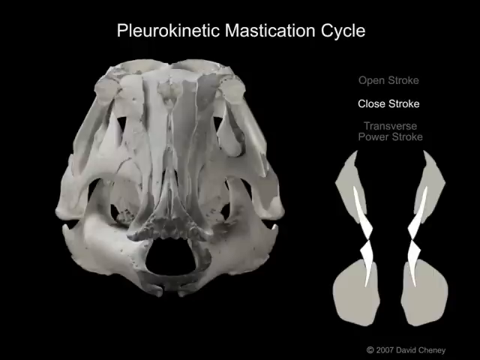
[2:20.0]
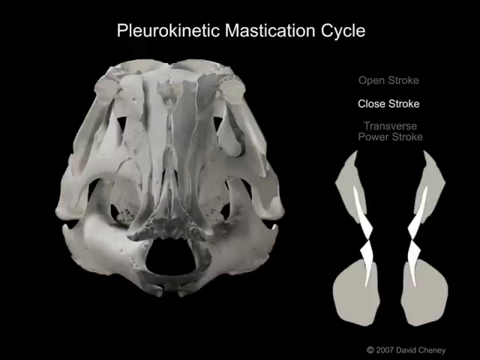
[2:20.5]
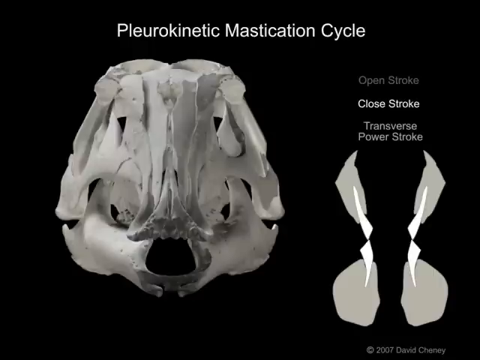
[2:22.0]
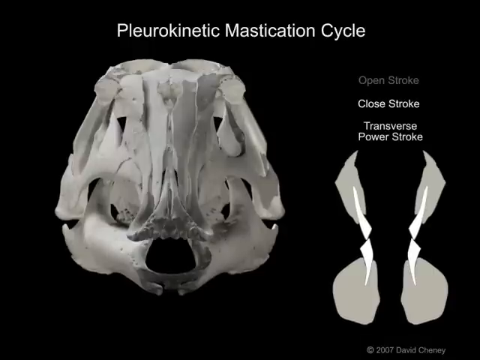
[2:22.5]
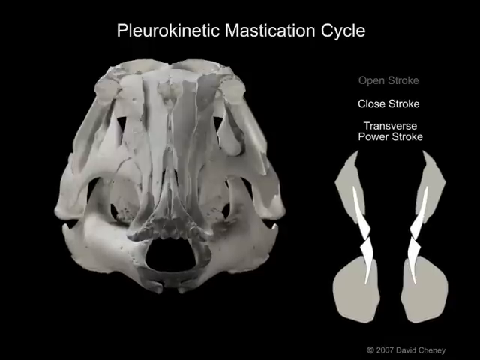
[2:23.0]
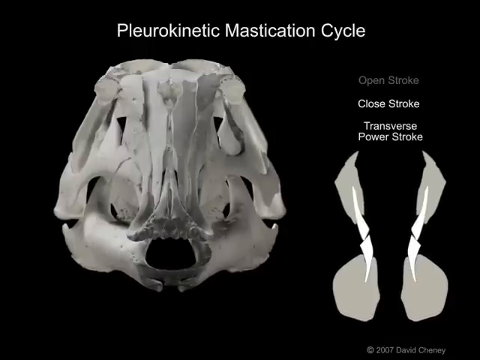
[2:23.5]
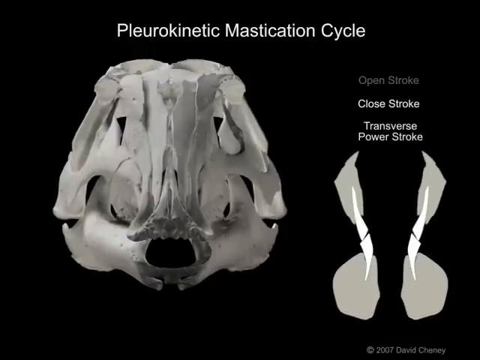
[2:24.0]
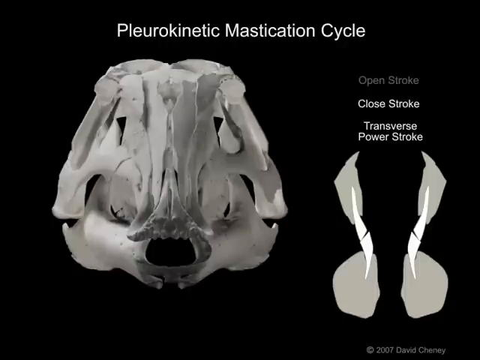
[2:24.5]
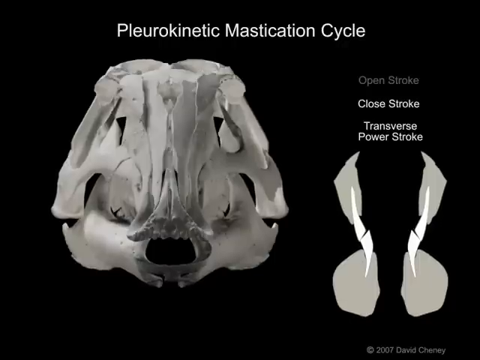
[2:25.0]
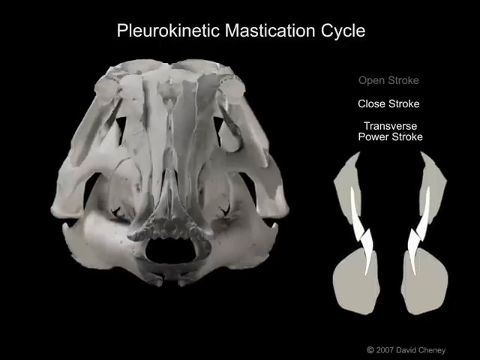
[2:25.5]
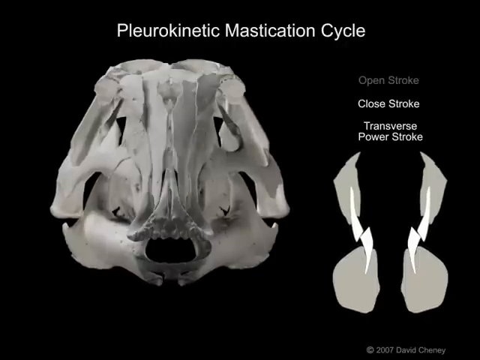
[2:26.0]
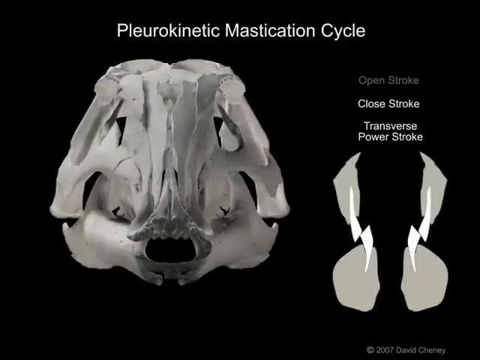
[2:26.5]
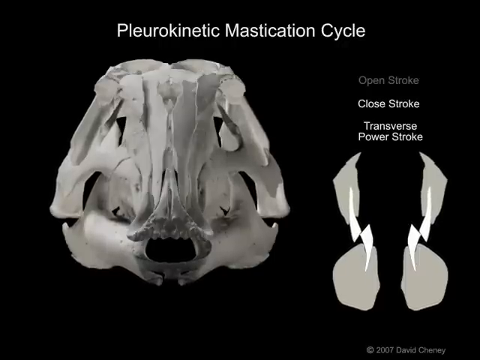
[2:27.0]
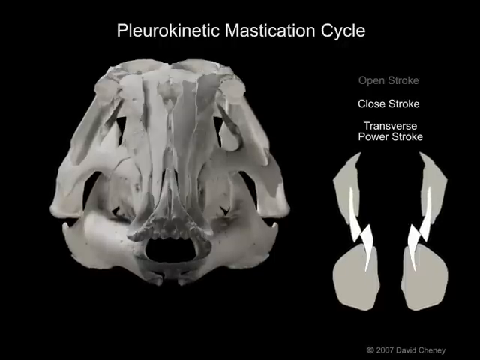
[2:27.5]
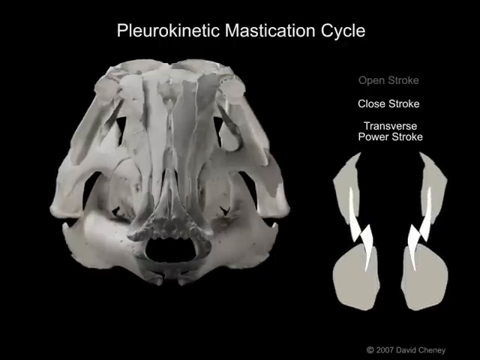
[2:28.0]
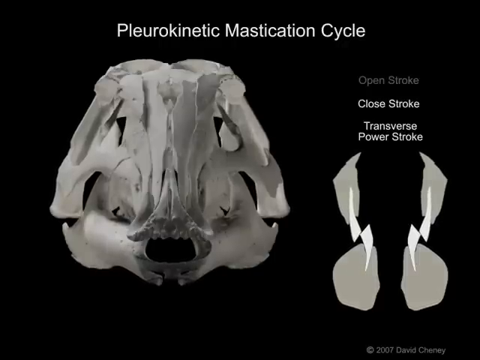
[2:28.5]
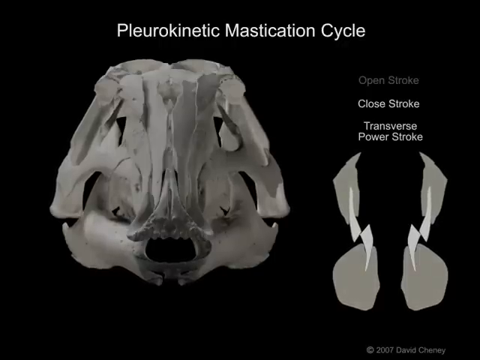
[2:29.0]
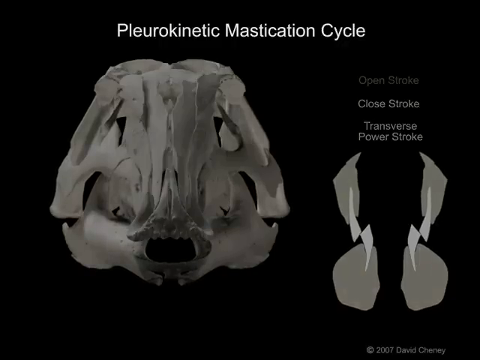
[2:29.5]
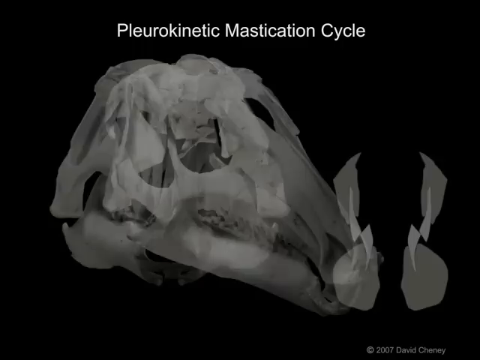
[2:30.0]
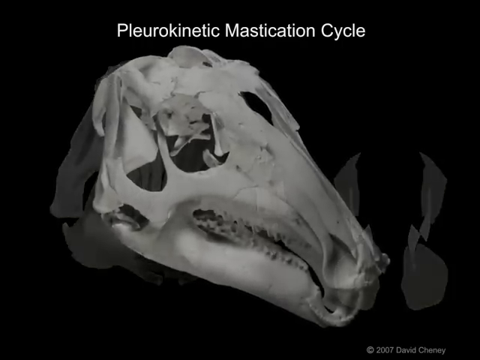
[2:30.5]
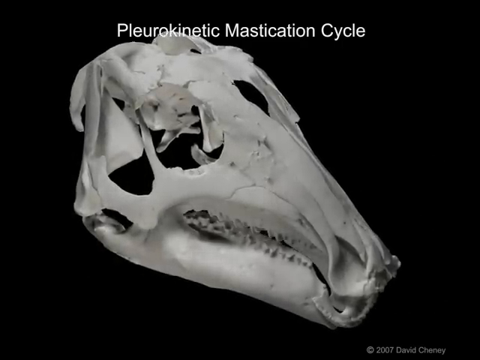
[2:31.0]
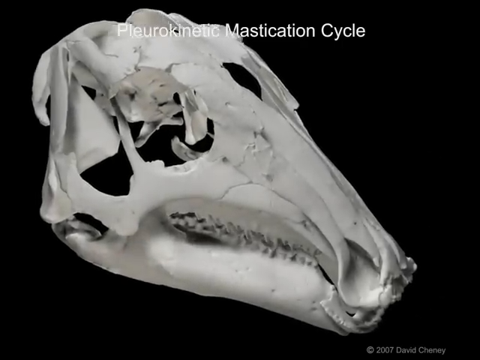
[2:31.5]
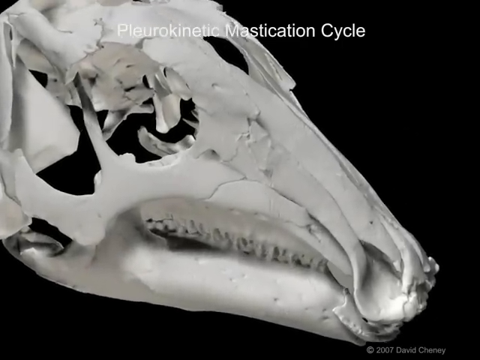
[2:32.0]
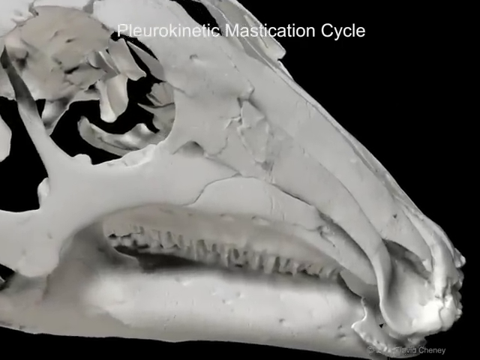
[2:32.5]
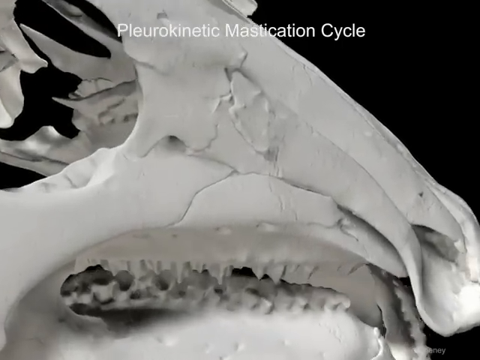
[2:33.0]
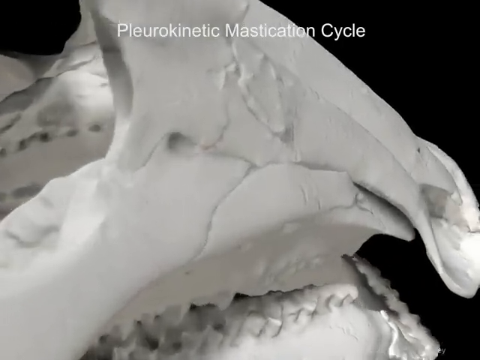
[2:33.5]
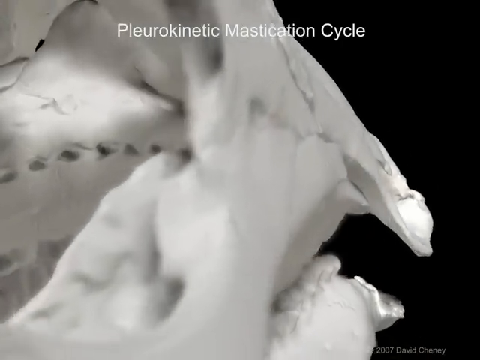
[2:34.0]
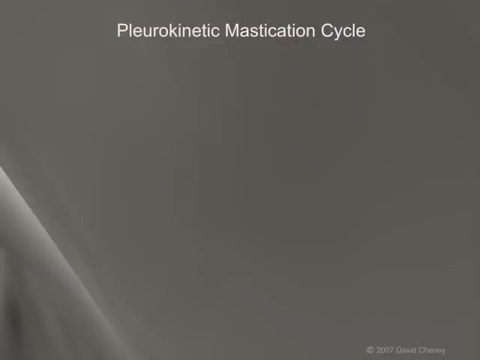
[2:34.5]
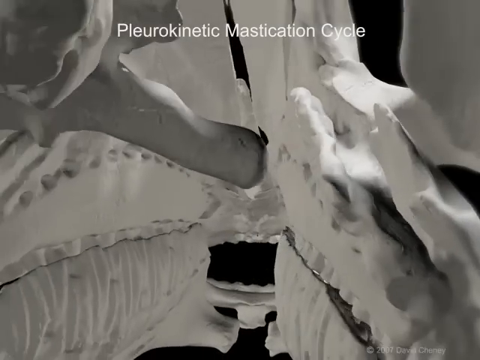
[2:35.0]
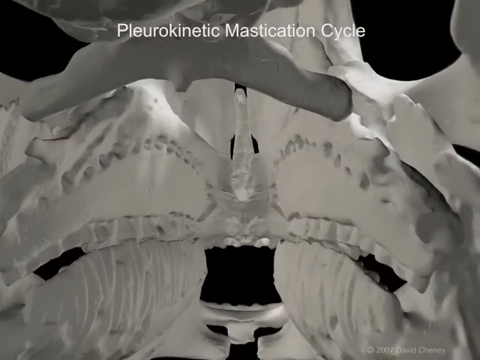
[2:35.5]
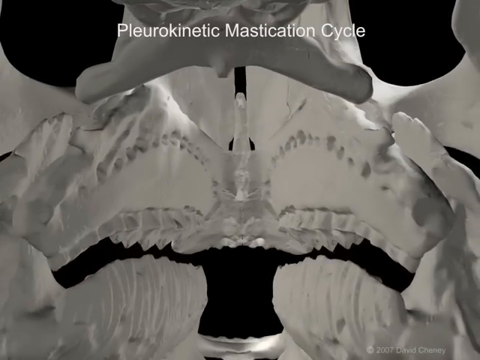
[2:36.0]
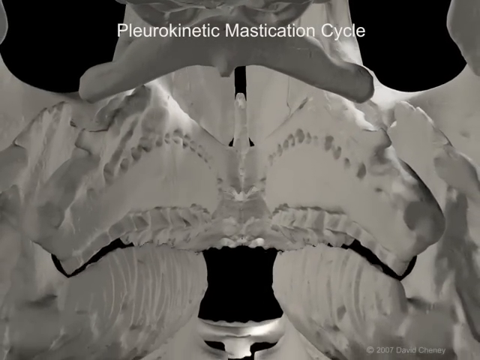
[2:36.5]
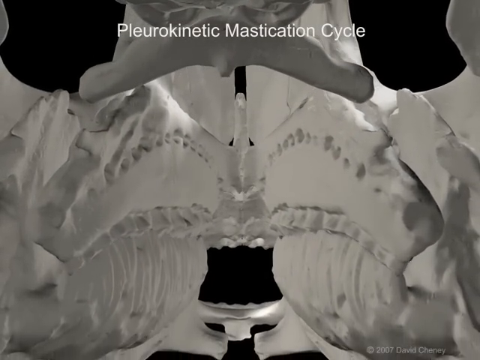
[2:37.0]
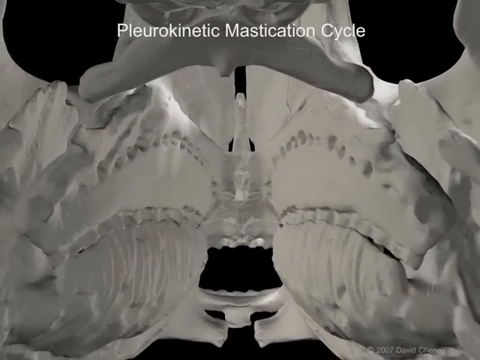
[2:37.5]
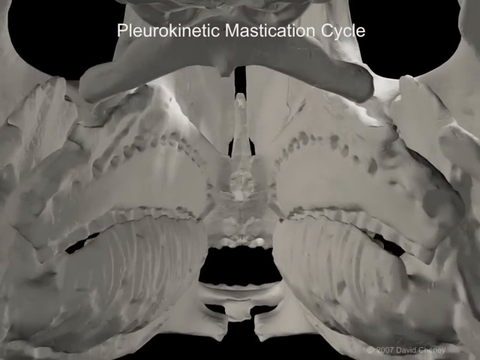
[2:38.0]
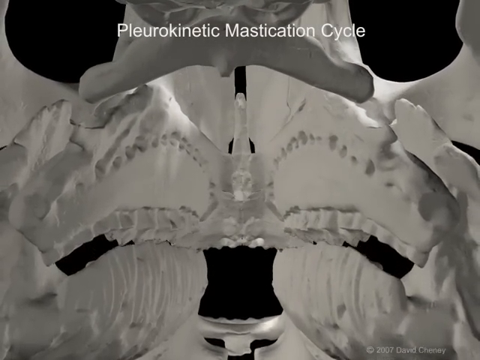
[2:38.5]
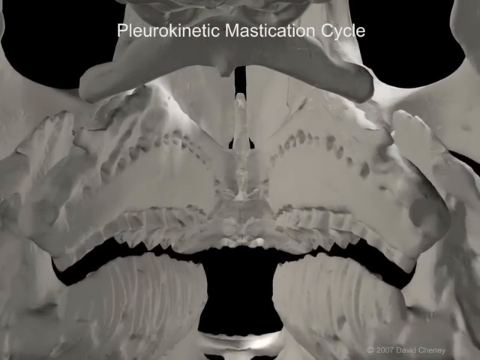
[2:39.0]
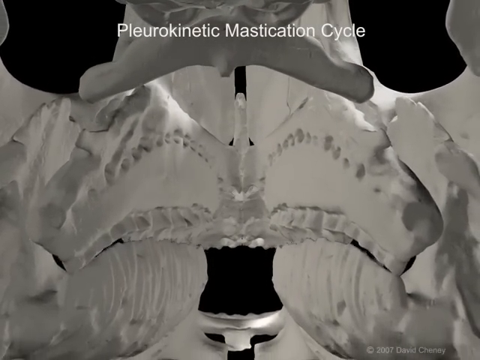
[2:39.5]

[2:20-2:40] The skull faces the camera on the left side of the screen. As the jaw and mouth open, the pieces on the right side, labeled "open stroke," "closed stroke" and "transverse power stroke," move too. At first the term "open stroke" is a lighter gray while the other two terms are darker gray; then "open stroke" turns dark gray and "closed stroke" and "transverse power stroke" turn lighter gray, apparently highlighted. That display disappears, and the skull is seen in right profile, with the snout or mouth part leaning toward the lower right while the jaws open up. It apparently has a lot of teeth, and the mouth opens wide and closes the entire time.